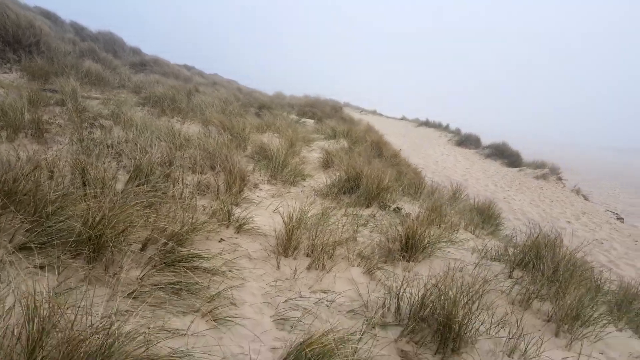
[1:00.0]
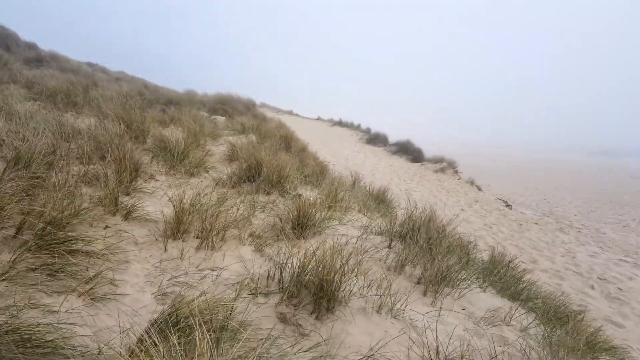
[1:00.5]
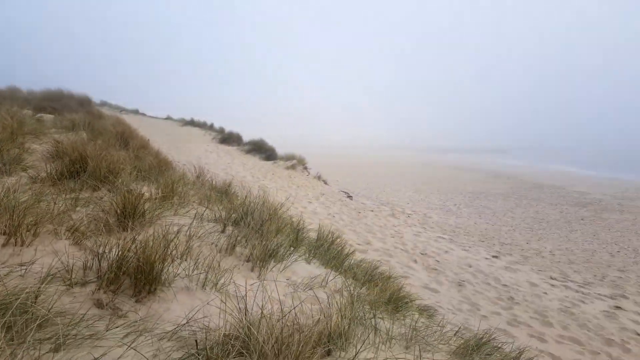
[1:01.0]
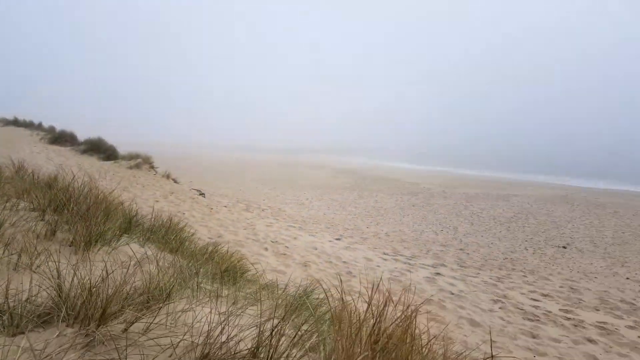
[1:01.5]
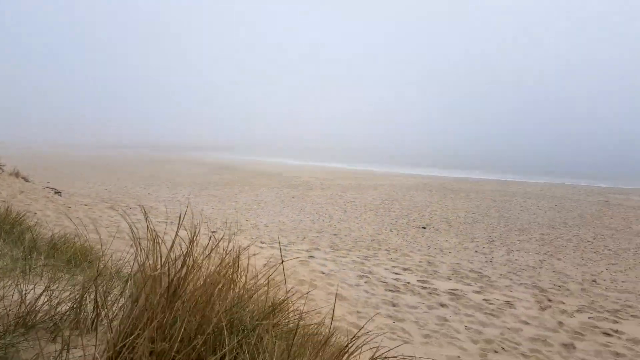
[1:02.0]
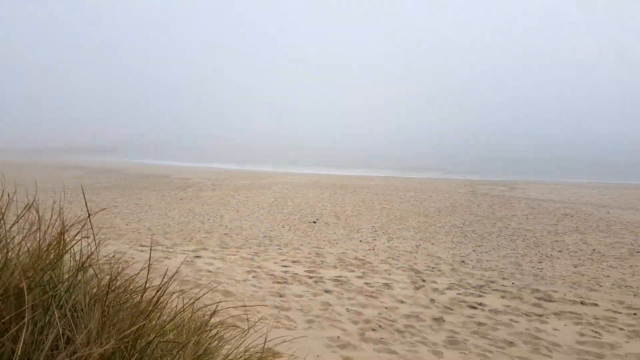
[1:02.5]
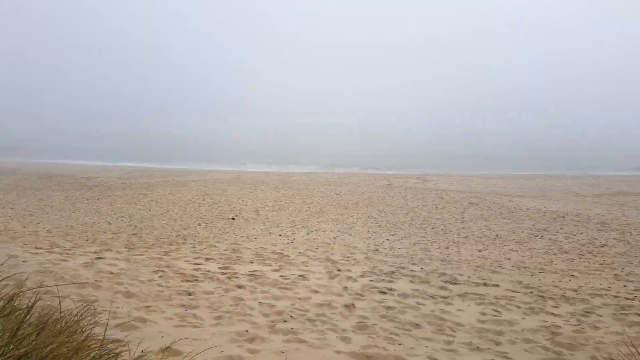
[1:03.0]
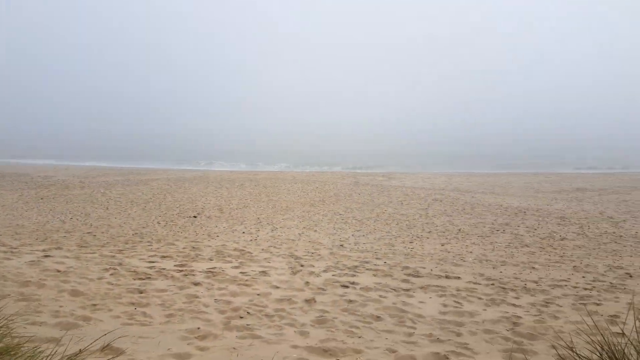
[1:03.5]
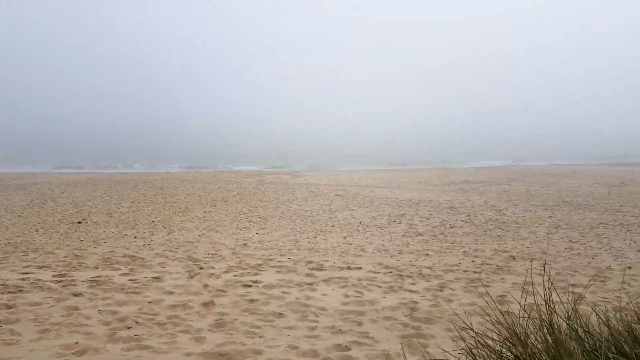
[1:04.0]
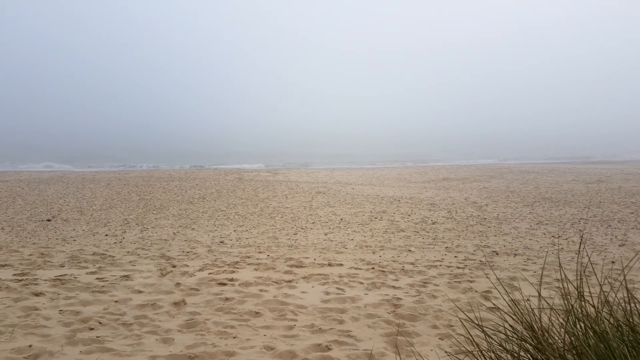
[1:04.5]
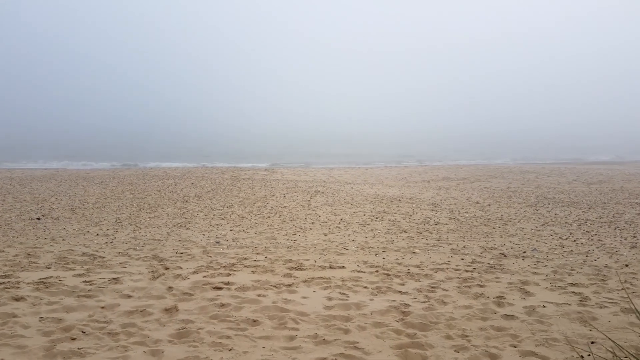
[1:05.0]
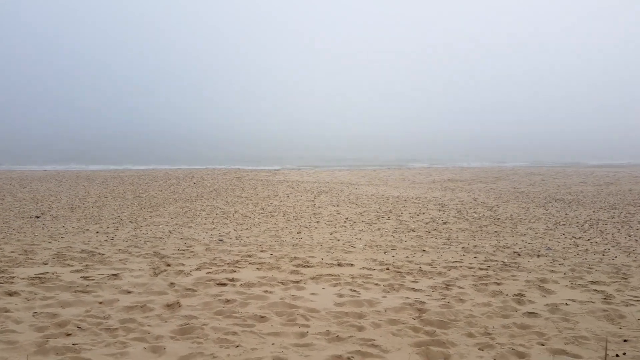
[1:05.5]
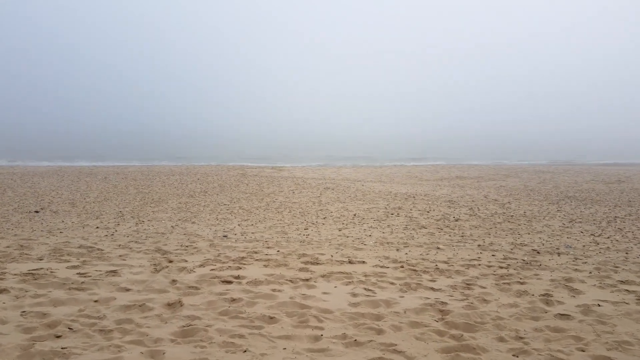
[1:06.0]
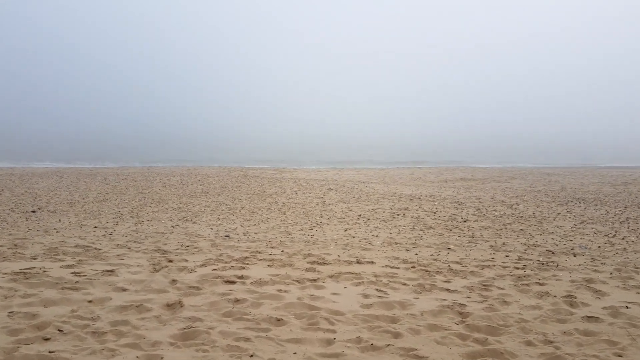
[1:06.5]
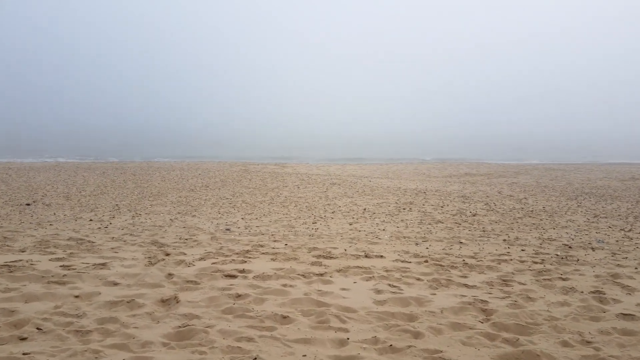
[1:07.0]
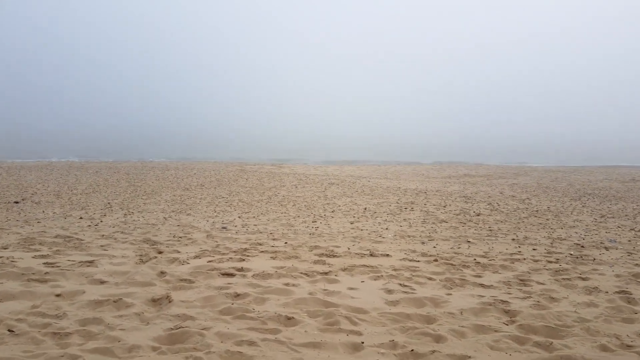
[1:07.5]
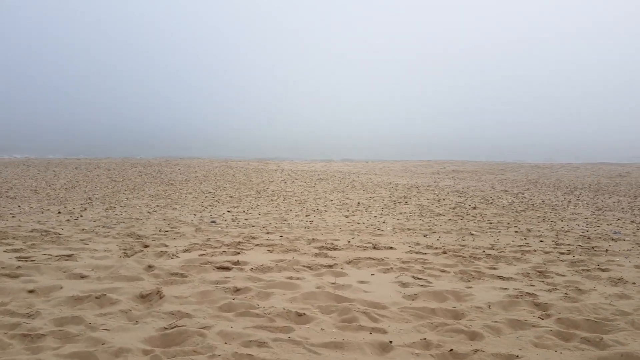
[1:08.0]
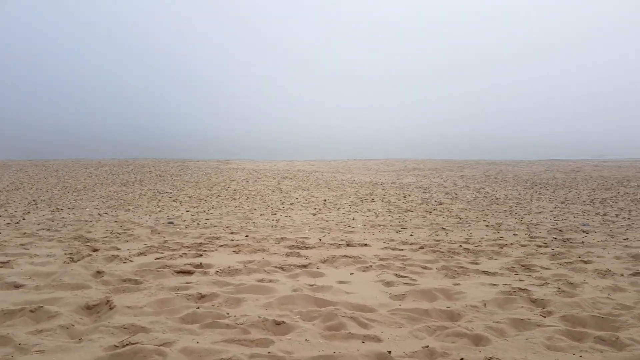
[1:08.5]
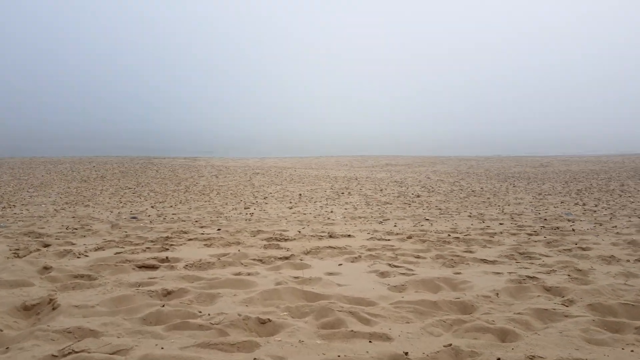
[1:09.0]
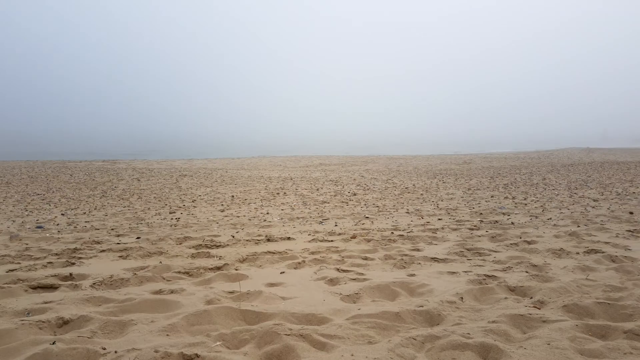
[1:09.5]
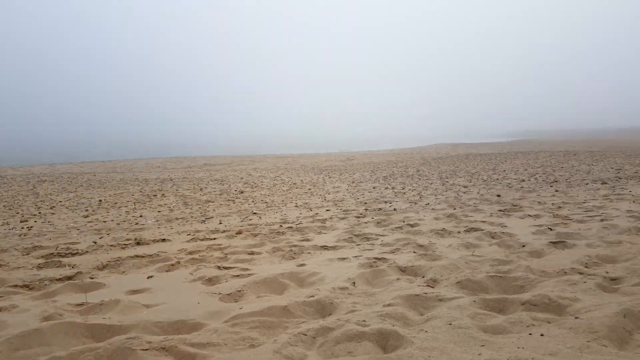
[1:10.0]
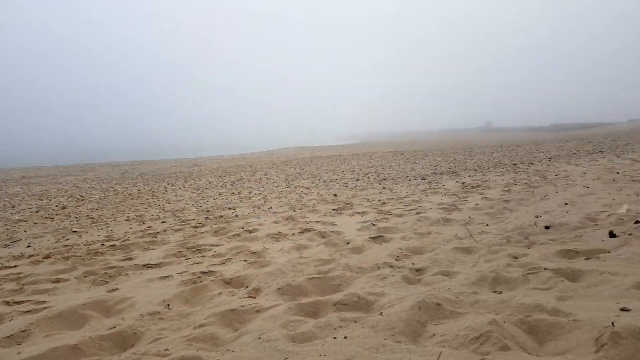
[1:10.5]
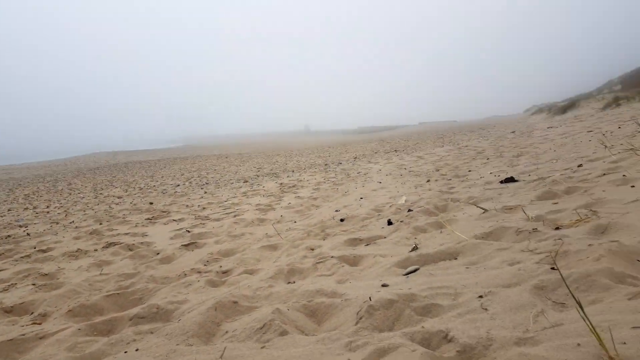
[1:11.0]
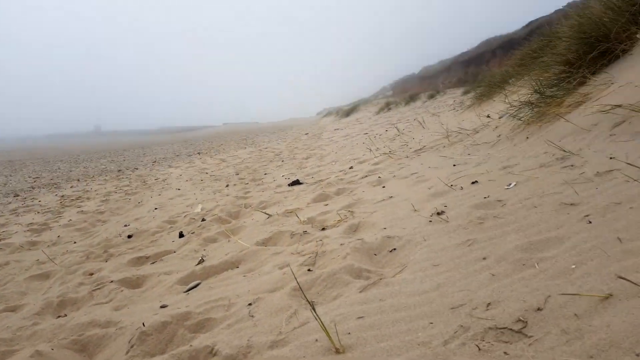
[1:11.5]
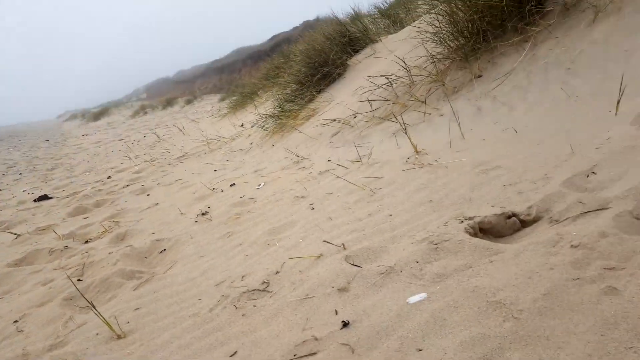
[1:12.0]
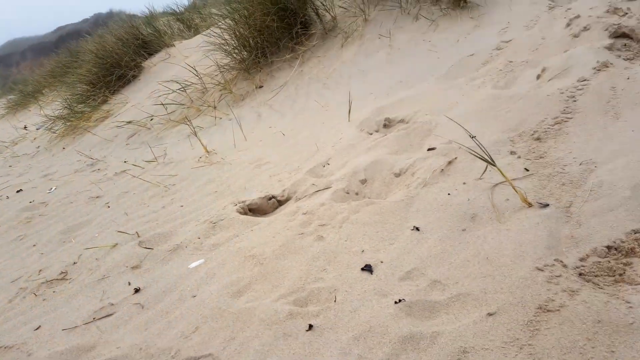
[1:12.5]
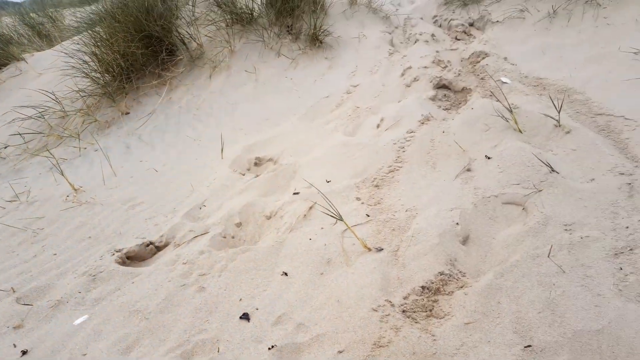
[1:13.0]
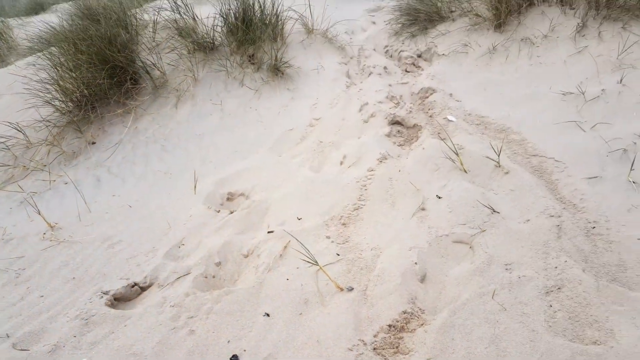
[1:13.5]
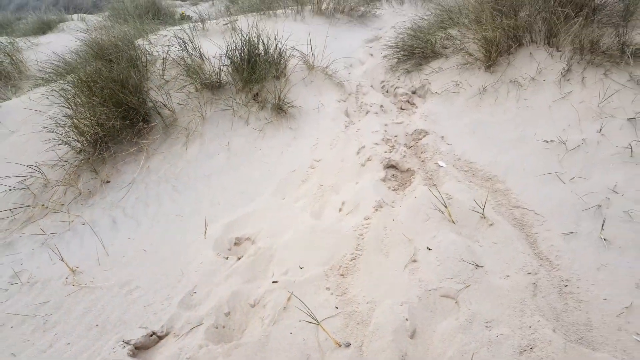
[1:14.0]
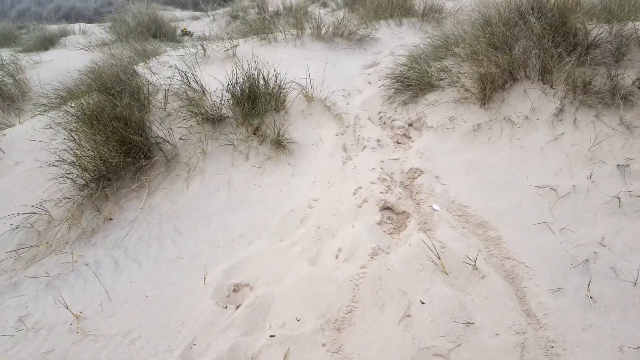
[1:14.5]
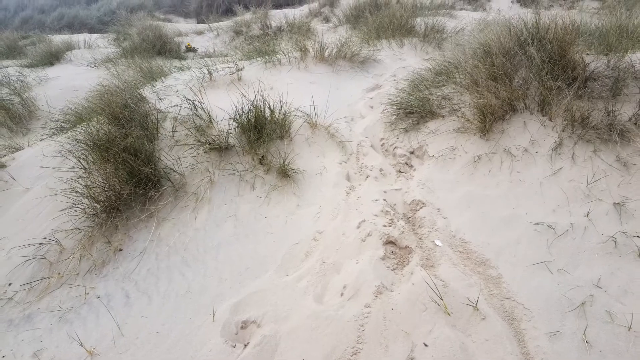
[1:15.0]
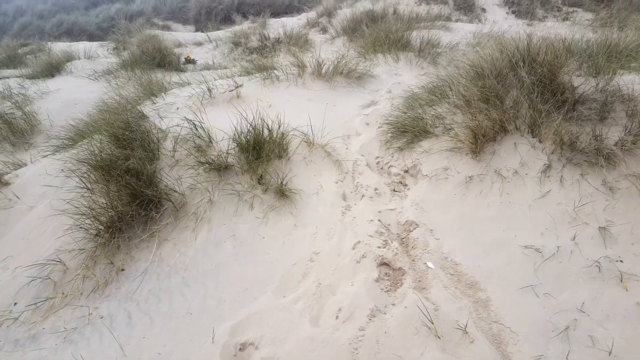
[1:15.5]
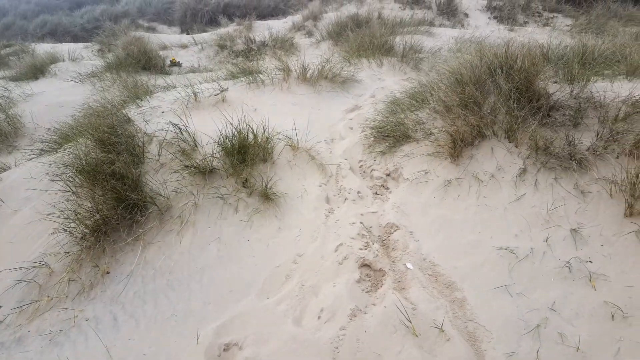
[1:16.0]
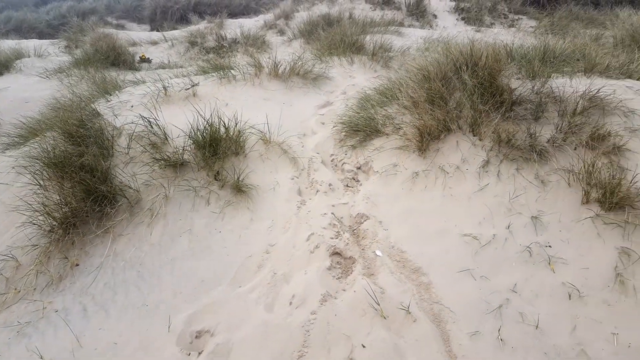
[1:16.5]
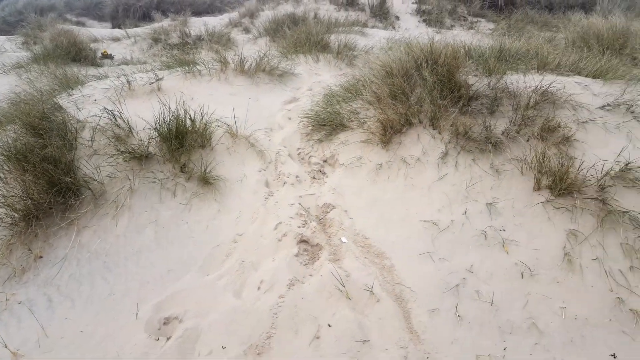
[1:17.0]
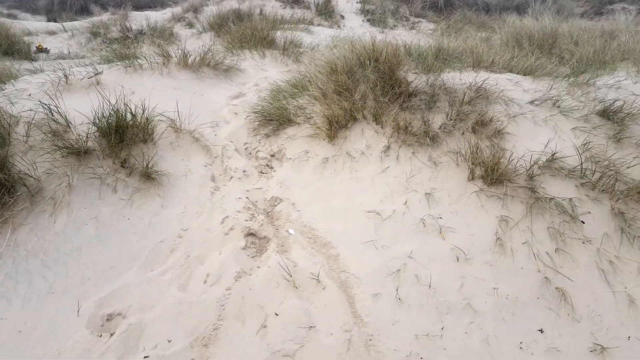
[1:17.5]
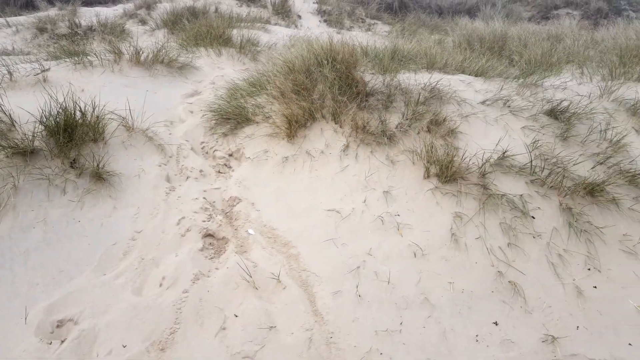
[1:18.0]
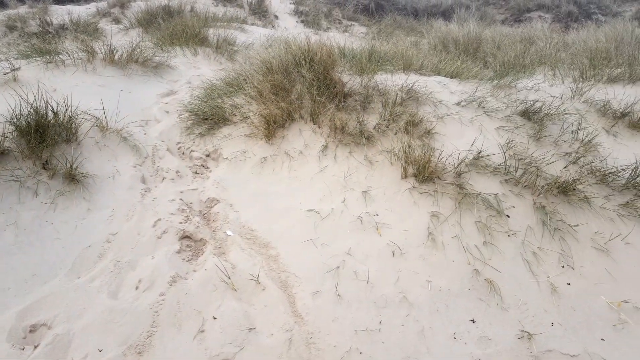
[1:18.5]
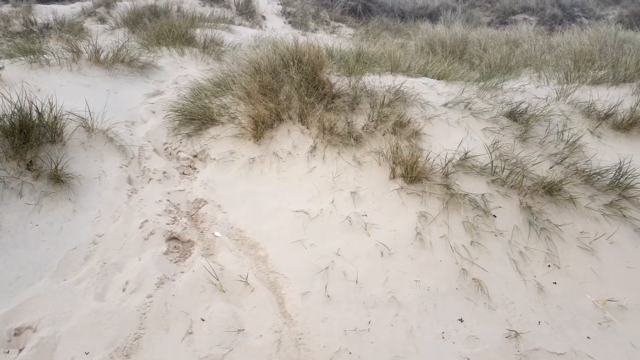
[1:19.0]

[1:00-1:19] The camera's point of view moves quickly from left to right, swaying in a wild but controlled manner toward the sea from a sand dune with vegetation on it. The view holds still for a second, showing the seashore with light, delicate waves in the distance. The sand has many grooves and miniature dunes from the wind, with only some very tiny spots, either pebbles or wooden debris, on the seashore and the dunes. The view turns around to focus on the sand dune with dead and alive vegetation, which is only a few meters high and gradually gets higher. It seems to be a not too windy, foggy, misty, grey day at the beach, with no one else present besides the unseen cameraman; it is a barren seashore and sand dune landscape.